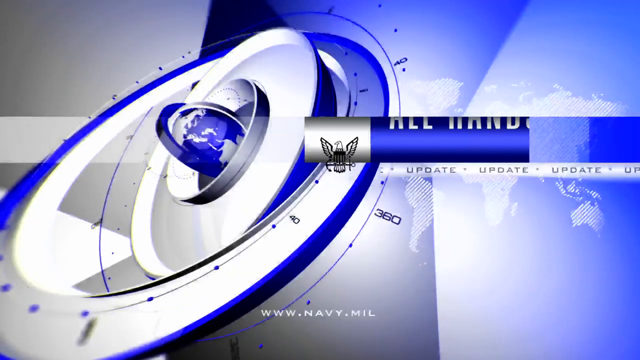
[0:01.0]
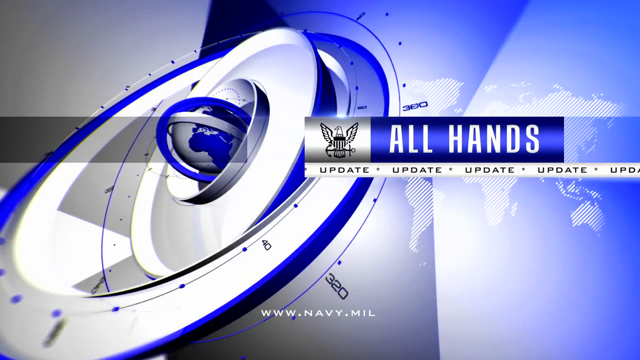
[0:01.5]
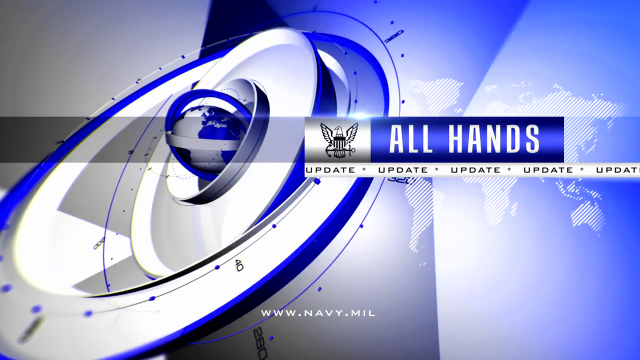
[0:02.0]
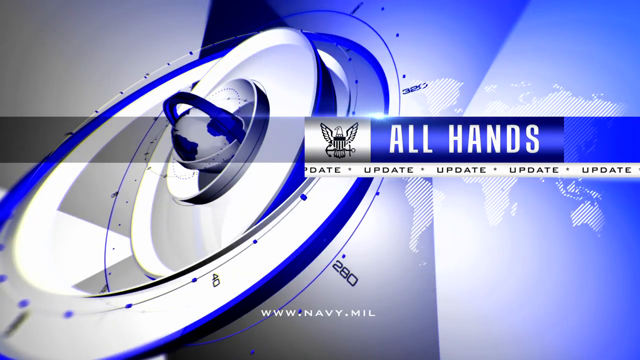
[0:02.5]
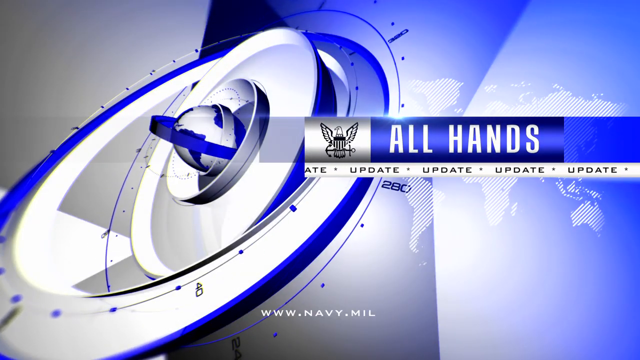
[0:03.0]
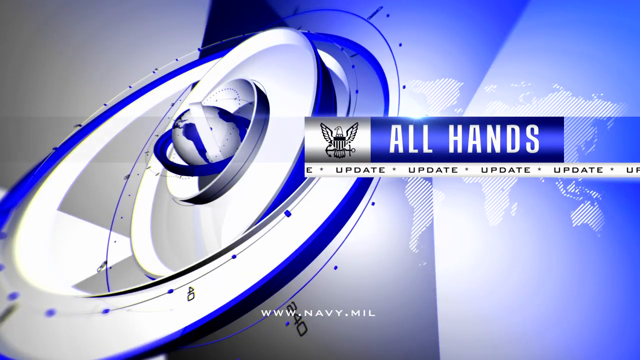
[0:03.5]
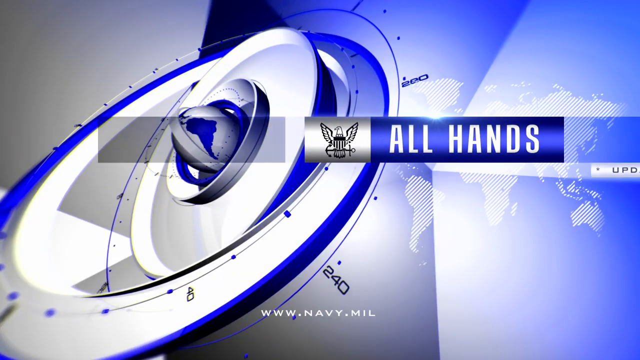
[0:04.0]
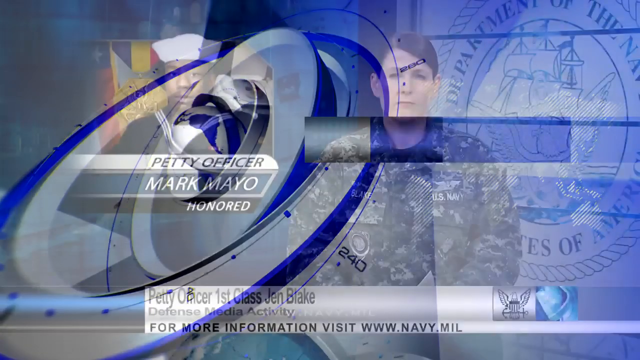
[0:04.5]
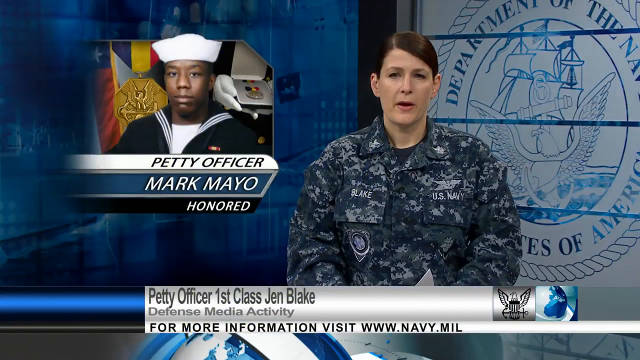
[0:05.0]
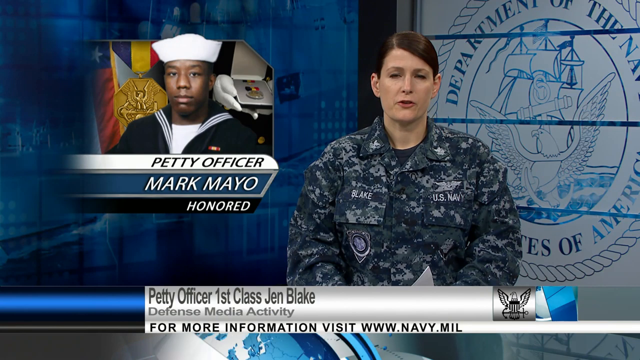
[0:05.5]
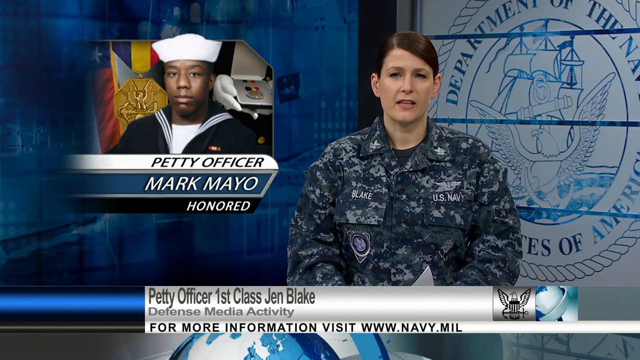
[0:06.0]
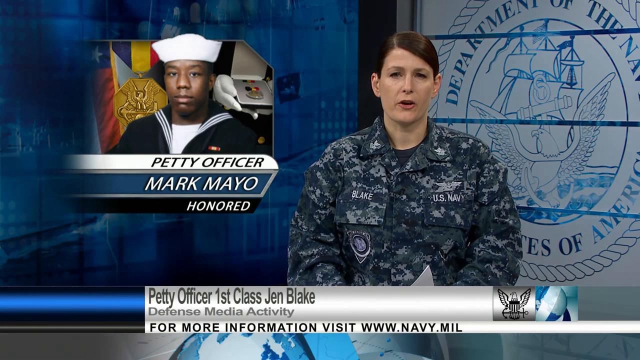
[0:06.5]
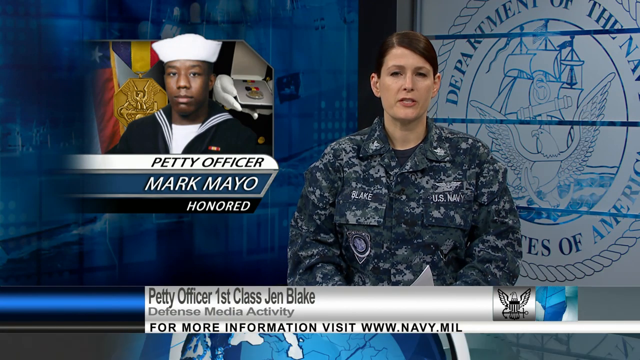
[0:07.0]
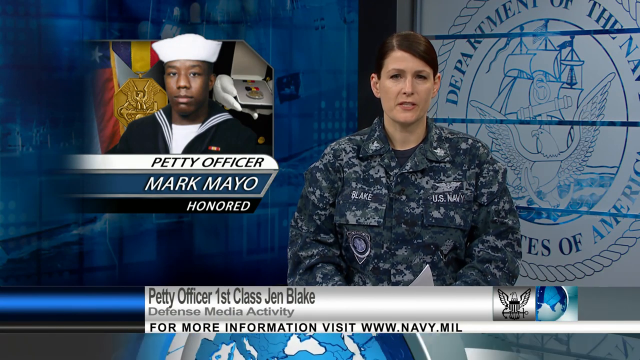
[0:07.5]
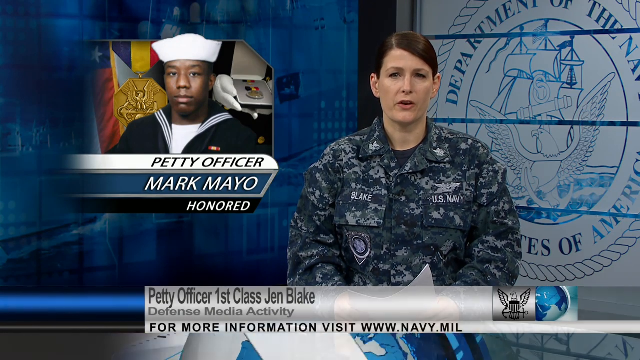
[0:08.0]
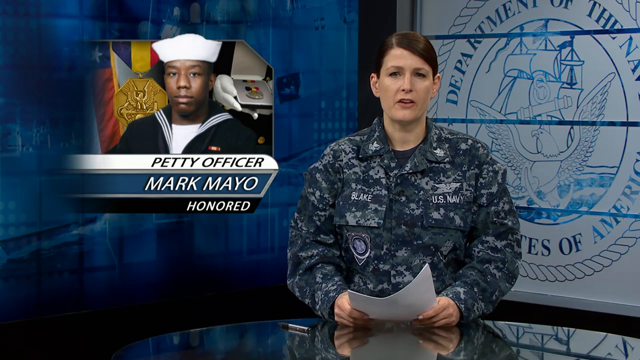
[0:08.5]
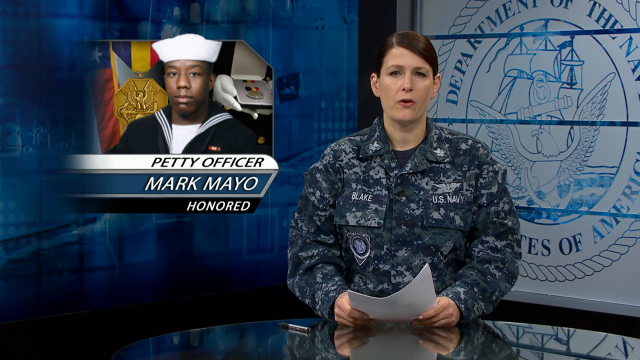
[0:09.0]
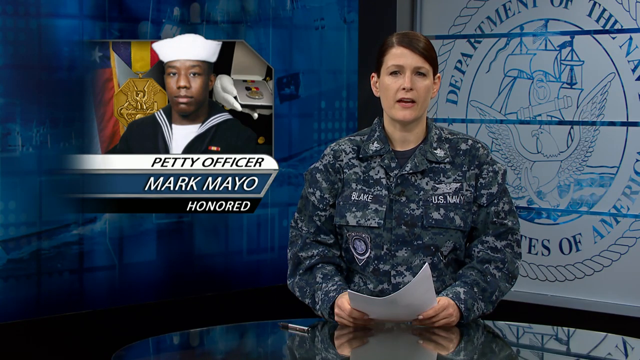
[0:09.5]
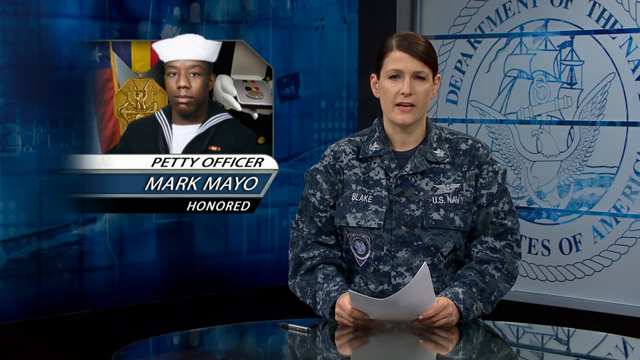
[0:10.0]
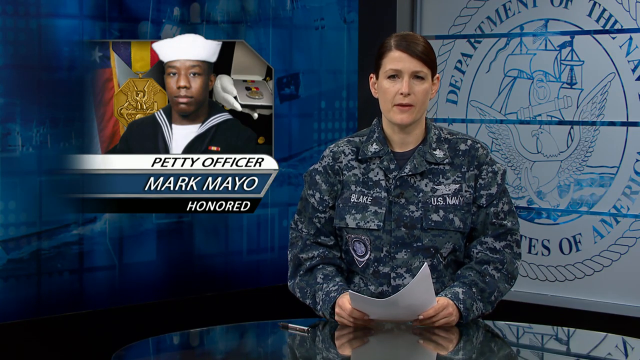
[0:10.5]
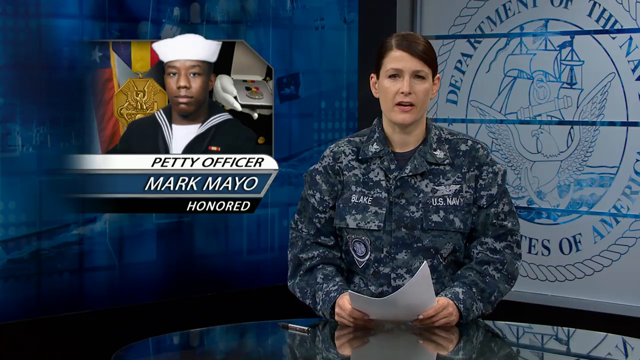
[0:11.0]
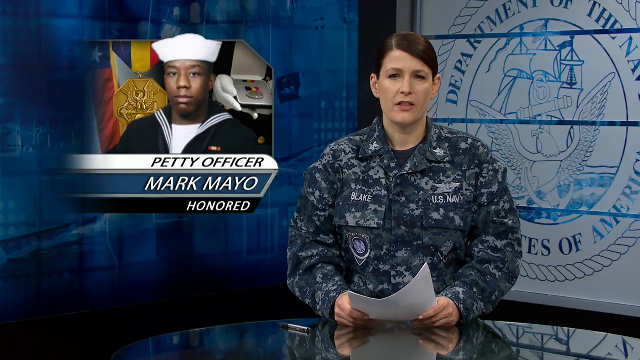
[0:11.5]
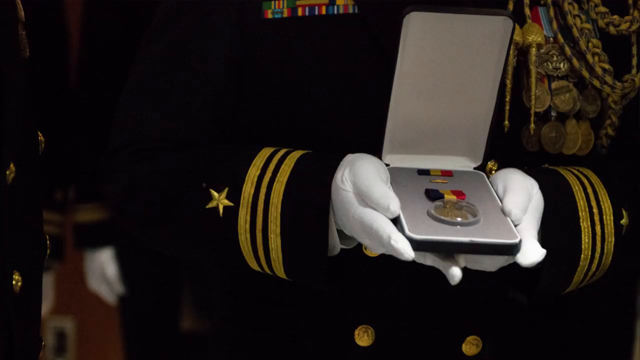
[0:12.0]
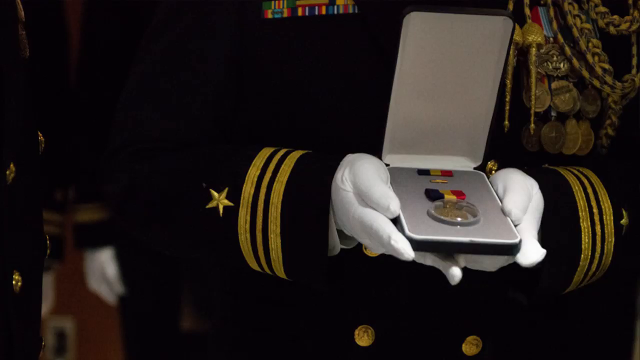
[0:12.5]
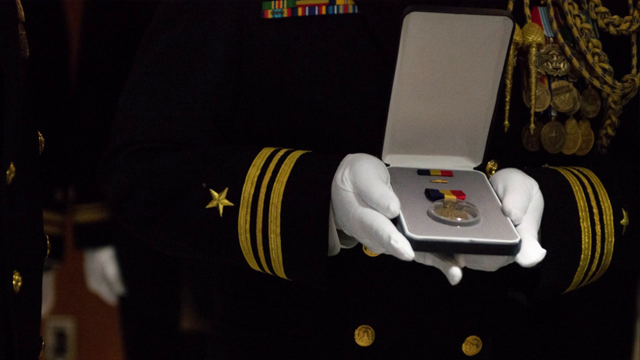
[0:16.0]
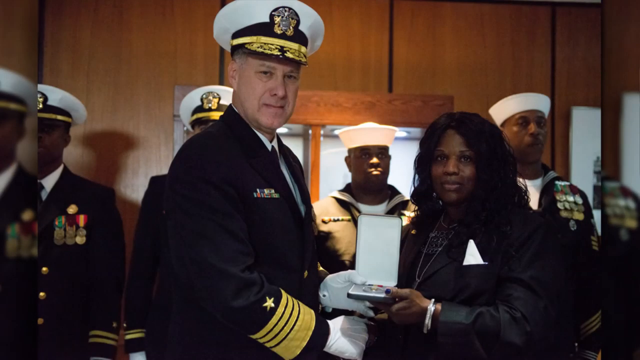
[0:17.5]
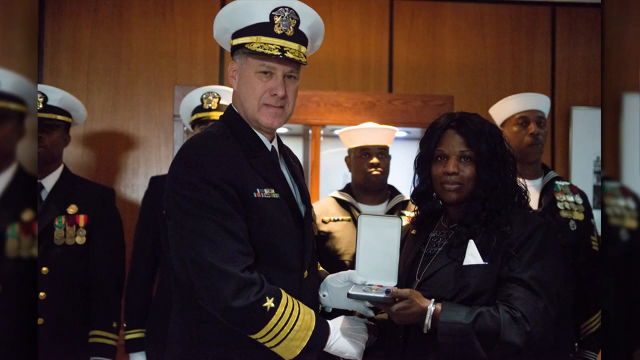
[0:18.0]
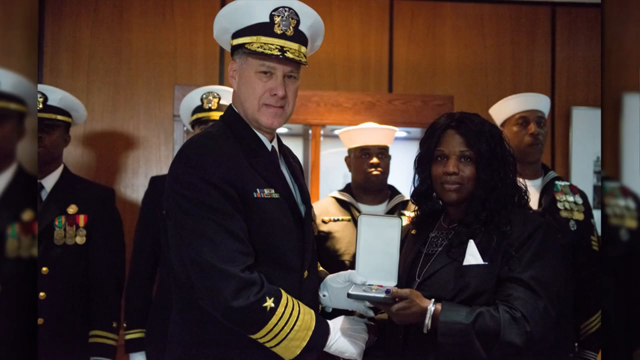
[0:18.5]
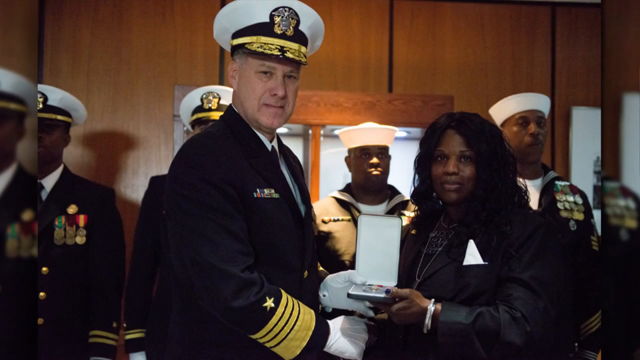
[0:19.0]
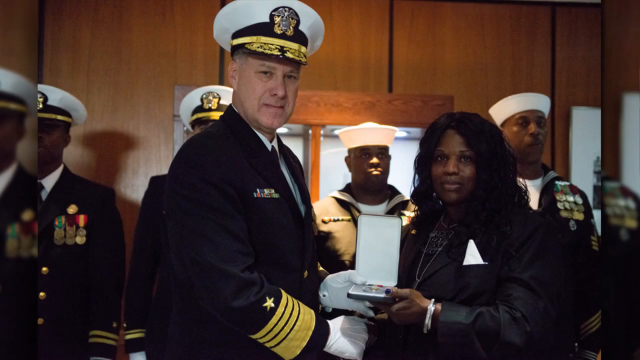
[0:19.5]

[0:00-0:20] A woman in a U.S. Navy uniform stands in front of a Navy background of the Department of the Navy. In the top left corner of the frame is a smaller inset image of a man wearing a Navy uniform, identified as Petty Officer Mark Meyer Onert. In this corner there are also star shapes on a dark blue background. Someone is holding something that might be a medal. A link to a website for more information is given. Medals appear: there is a white man, and men behind him are wearing medals. A woman holds something similar to what the Navy man holds, and they seem to be being honored. A captain is honored with something from the woman. Another woman standing there, wearing a face mask, is giving something. Many medals are visible and men are holding medals, but only the captain is holding something he seems to want to give to someone. A woman holds slippers, and there is a can on the table.